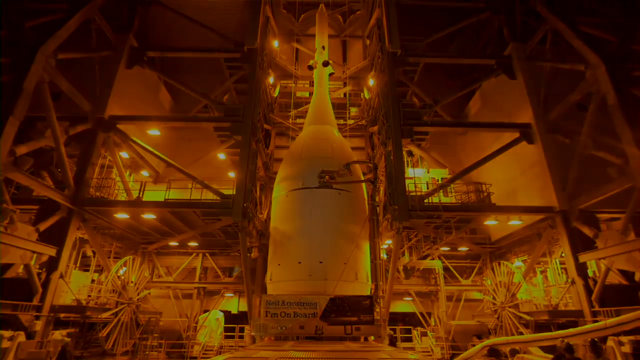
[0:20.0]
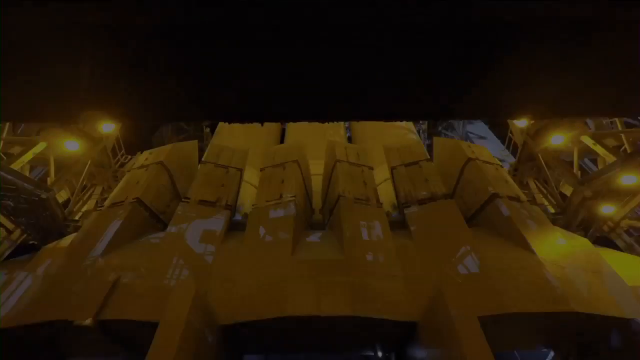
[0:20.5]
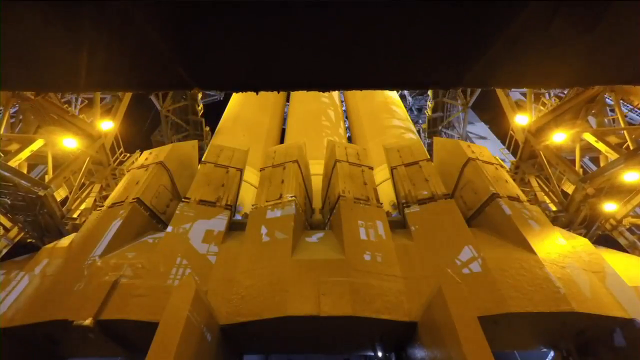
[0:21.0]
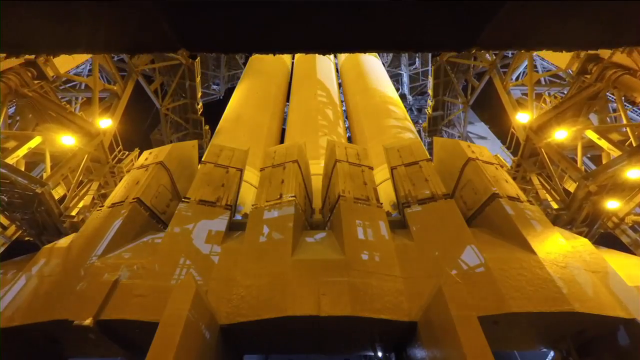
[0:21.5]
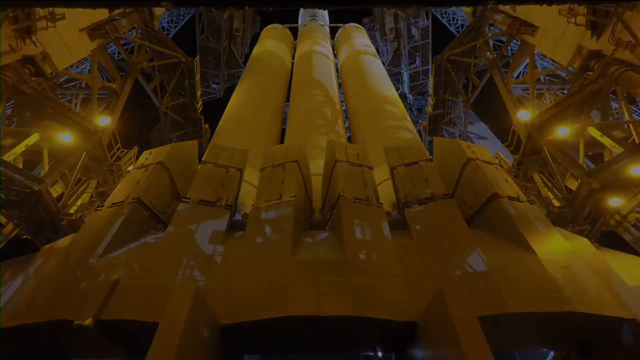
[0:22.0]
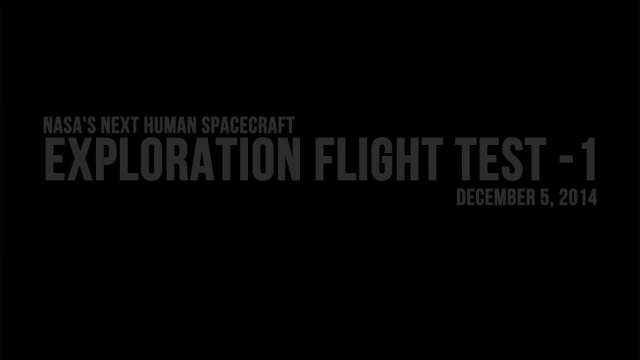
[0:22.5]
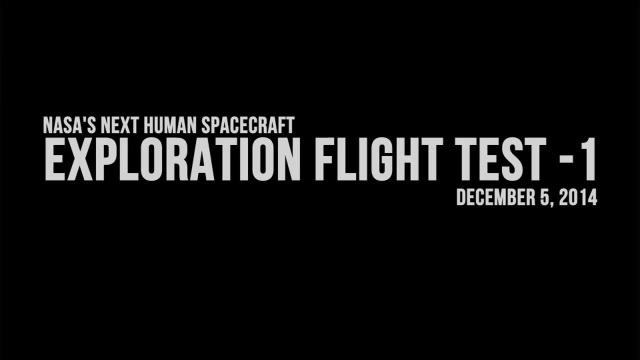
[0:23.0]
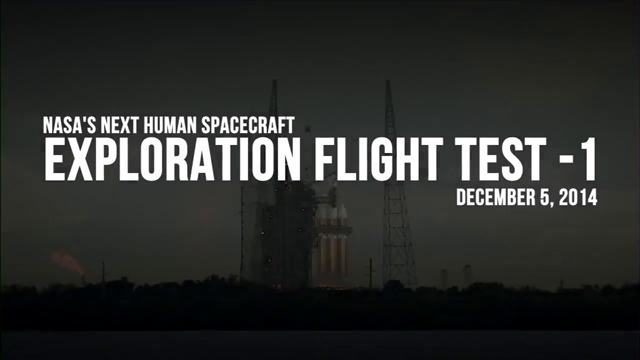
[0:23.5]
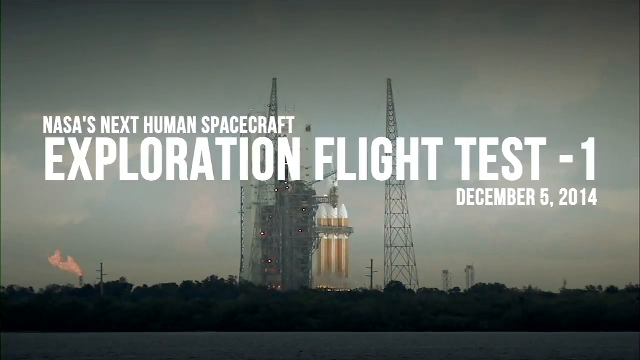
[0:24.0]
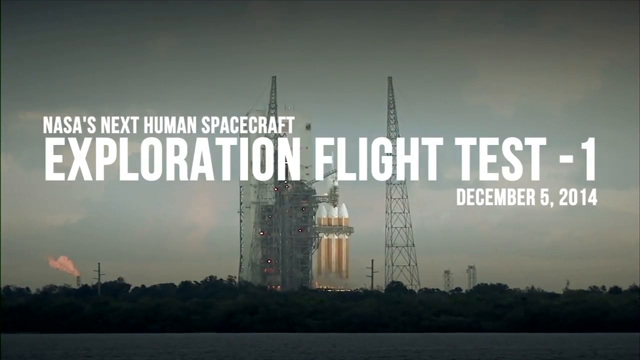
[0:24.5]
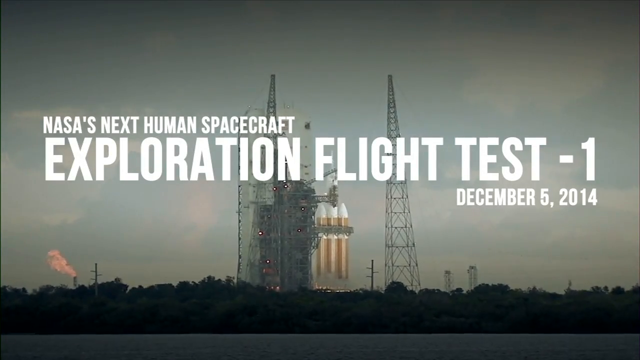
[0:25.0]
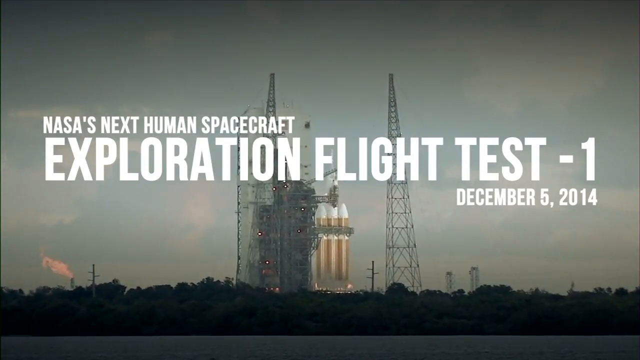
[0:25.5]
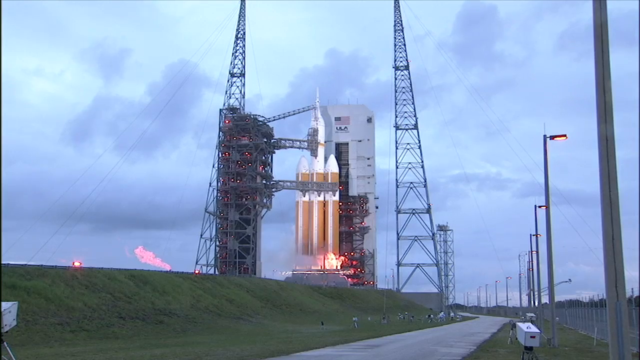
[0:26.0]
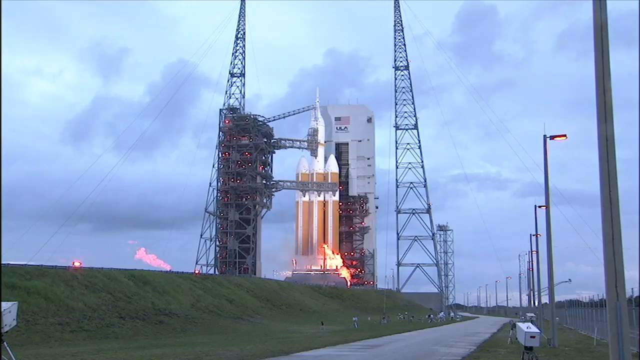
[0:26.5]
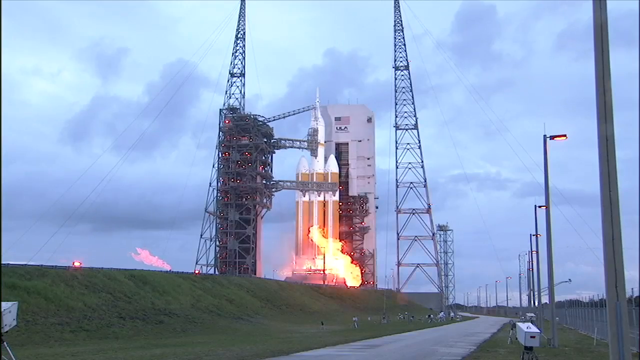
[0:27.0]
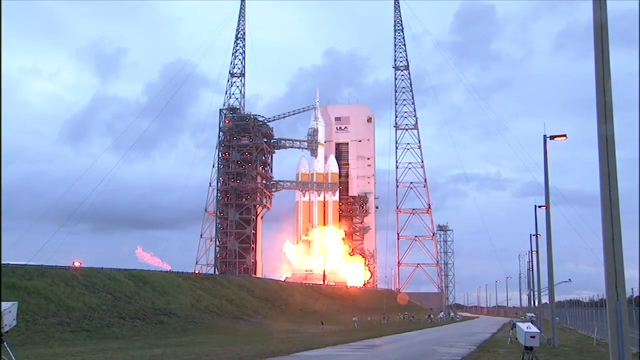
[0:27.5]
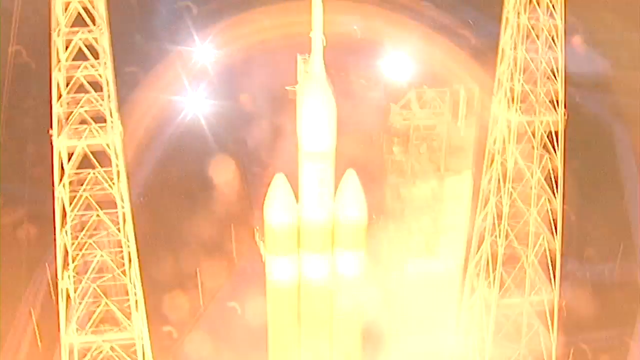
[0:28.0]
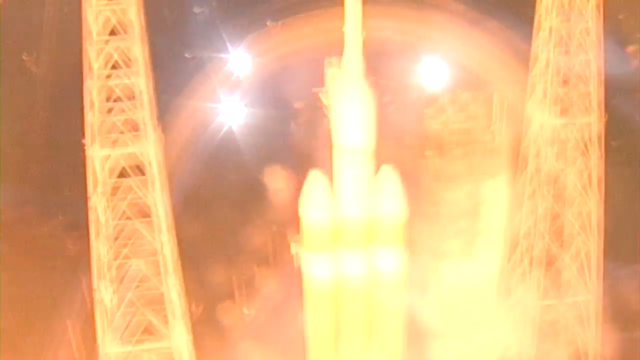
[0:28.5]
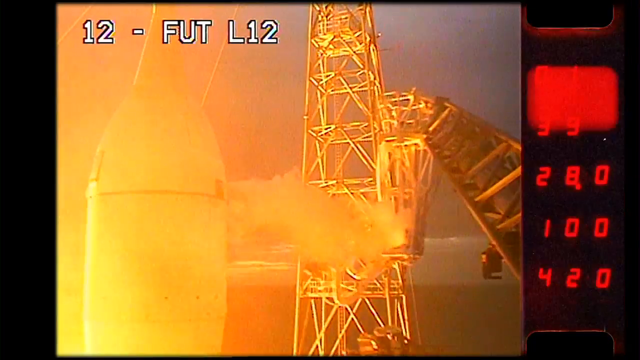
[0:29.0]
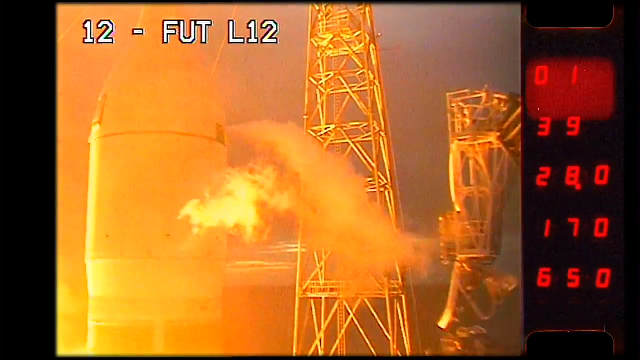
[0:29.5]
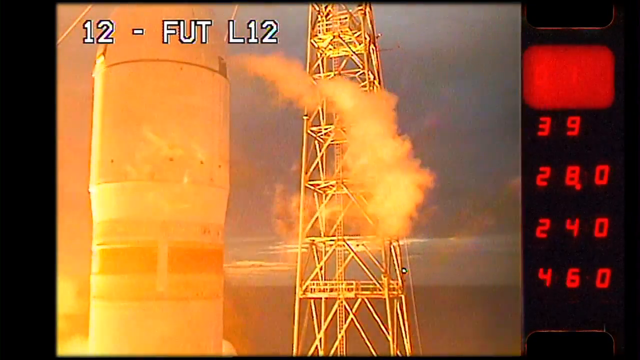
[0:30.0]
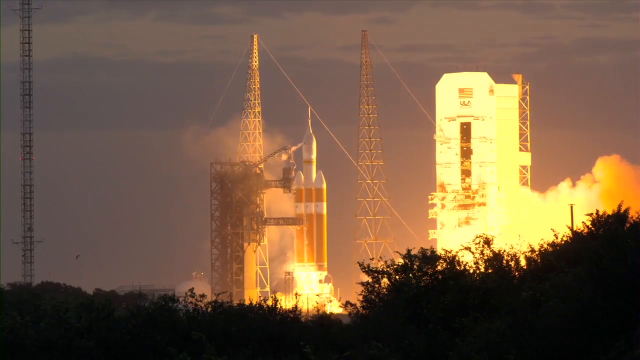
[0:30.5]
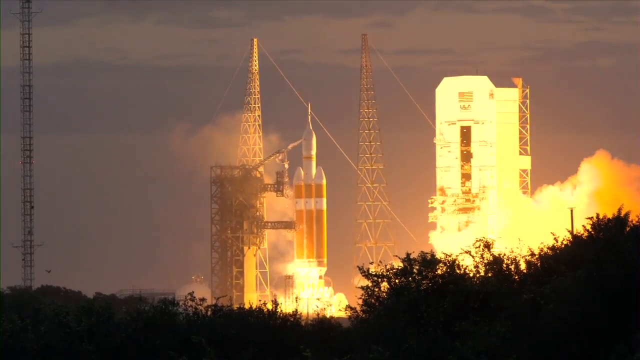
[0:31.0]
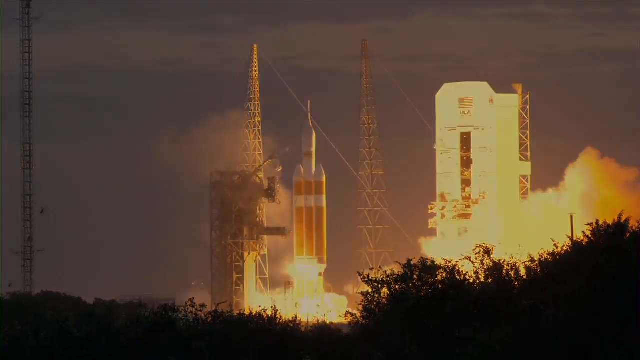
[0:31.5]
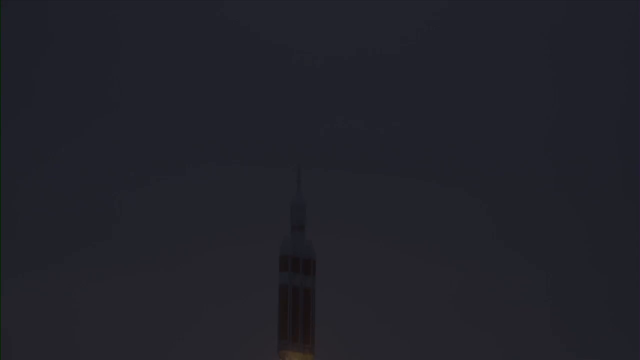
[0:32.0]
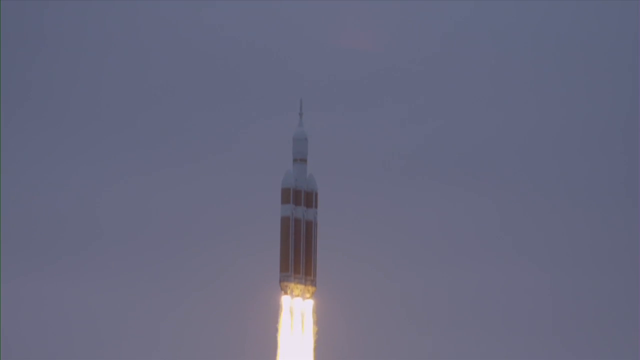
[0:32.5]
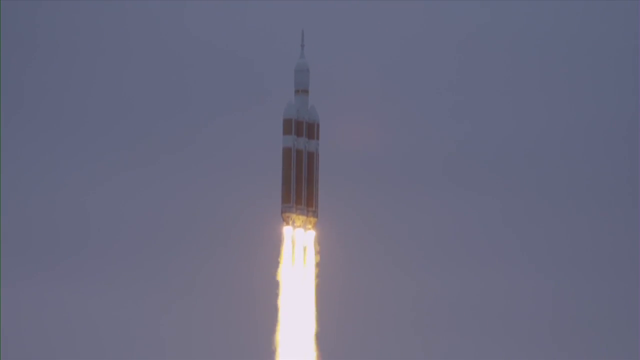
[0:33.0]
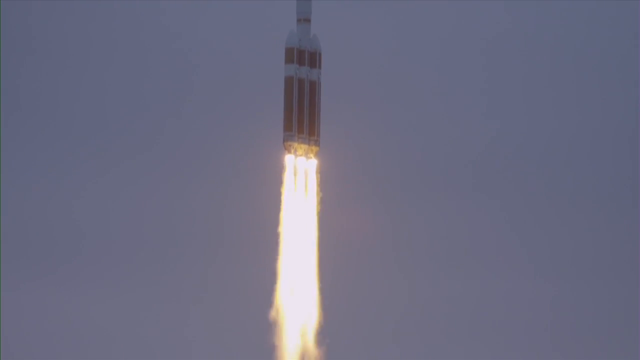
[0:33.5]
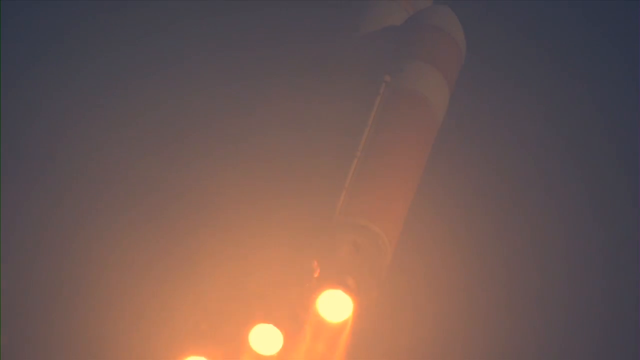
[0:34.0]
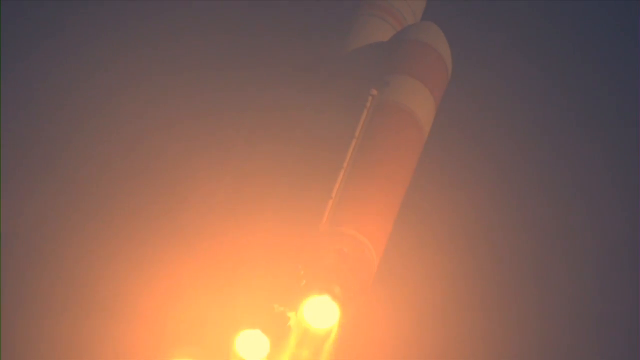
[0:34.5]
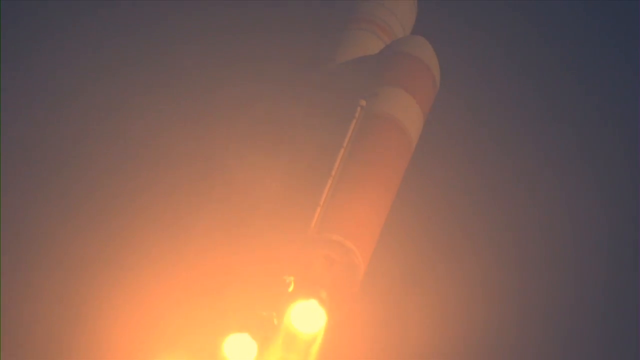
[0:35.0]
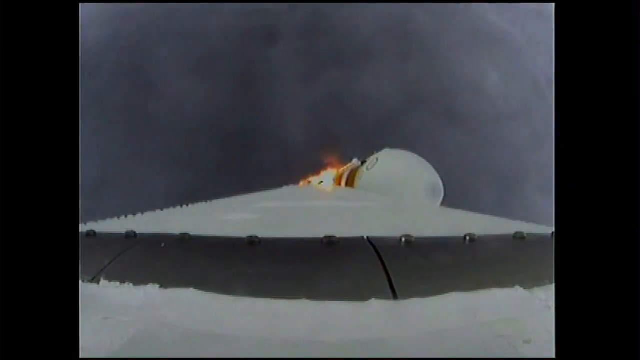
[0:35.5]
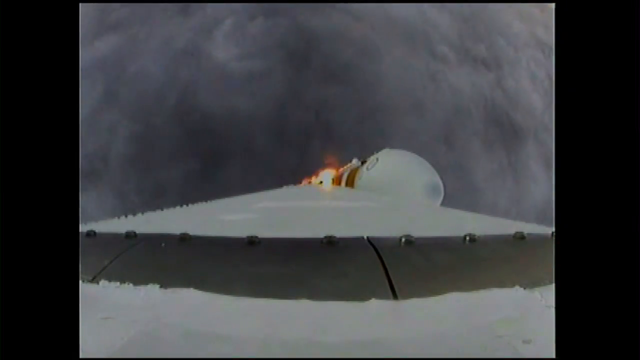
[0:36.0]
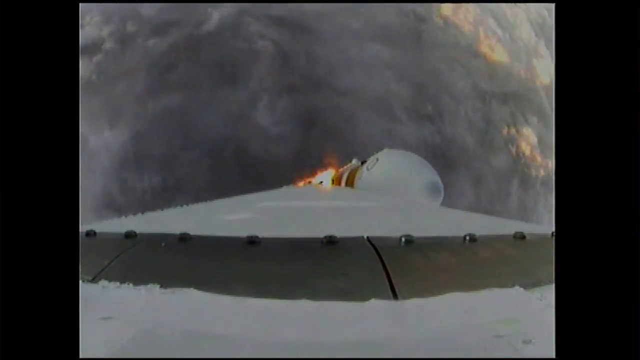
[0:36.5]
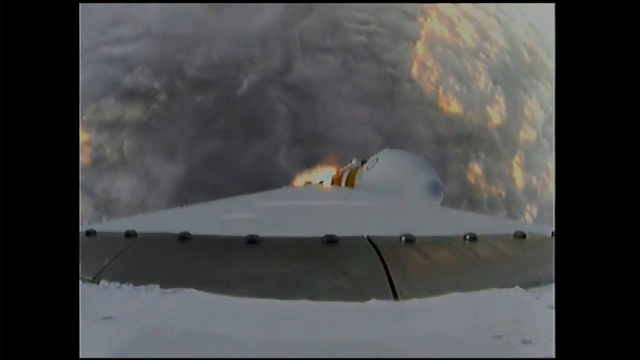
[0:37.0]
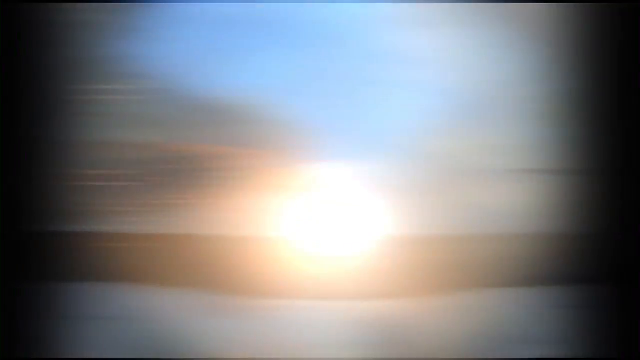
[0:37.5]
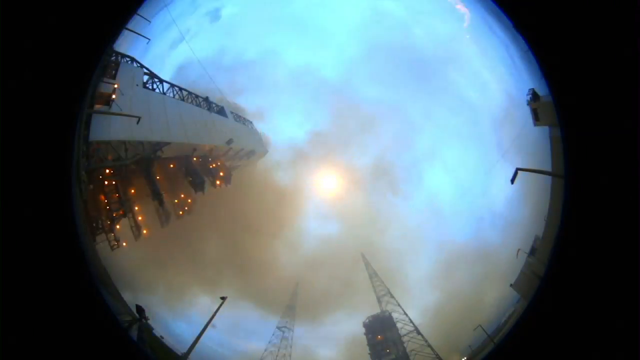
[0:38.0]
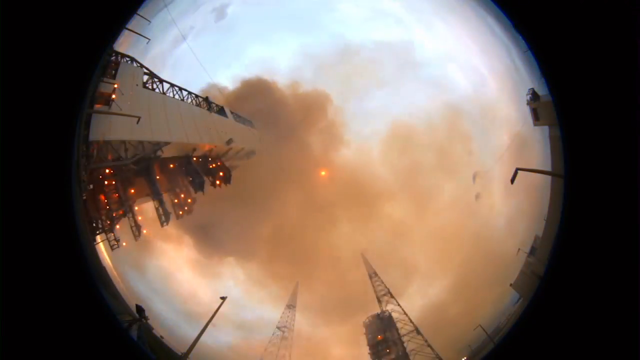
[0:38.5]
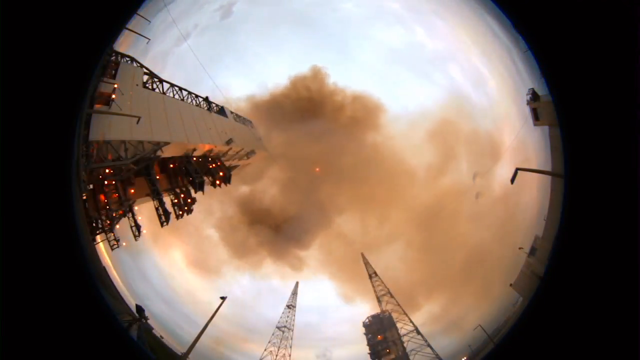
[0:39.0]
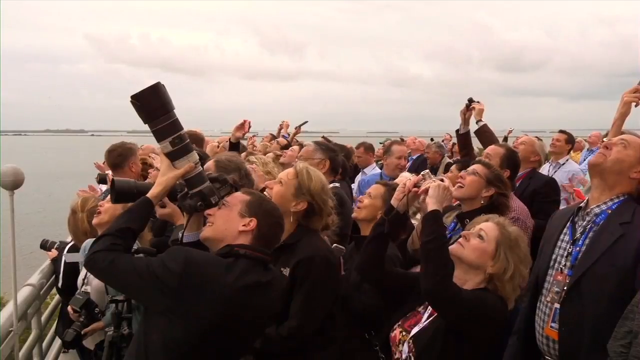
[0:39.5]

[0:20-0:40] A launch pad holds a large rocket made up of three large cylindrical canisters. A sign reads "NASA's next human spacecraft Exploration flight test one December 5th 2014". A distant view shows the launch site from some miles away. The rocket ignites all three boosters and detaches from the platform holding it up, rising into the atmosphere. It is shown from multiple views, both from some distance away and from underneath, filmed from the launch pad itself, and commentators are seen filming it. The rocket has two side boosters, and all three are ignited before it launches. The assembly launch platform detaches from it, with an arm moving sideways to let the rocket leave the platform.